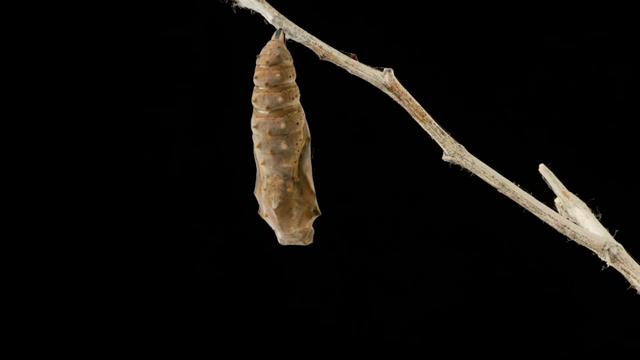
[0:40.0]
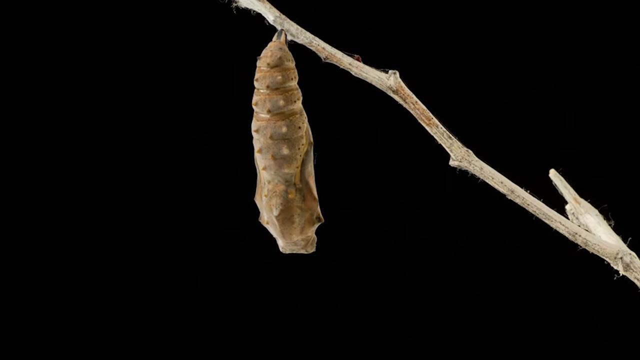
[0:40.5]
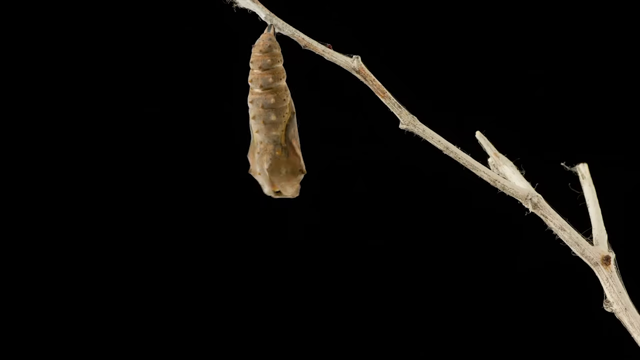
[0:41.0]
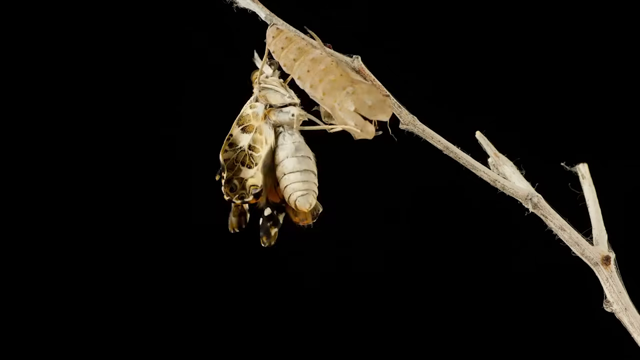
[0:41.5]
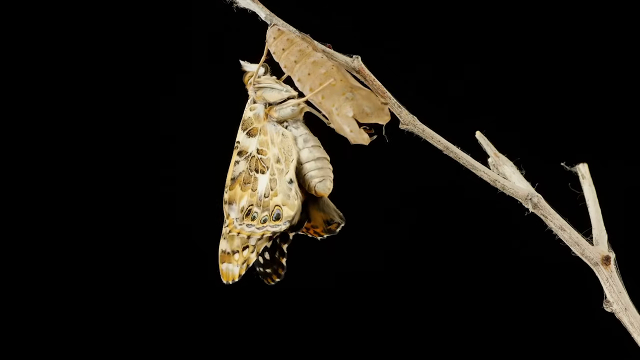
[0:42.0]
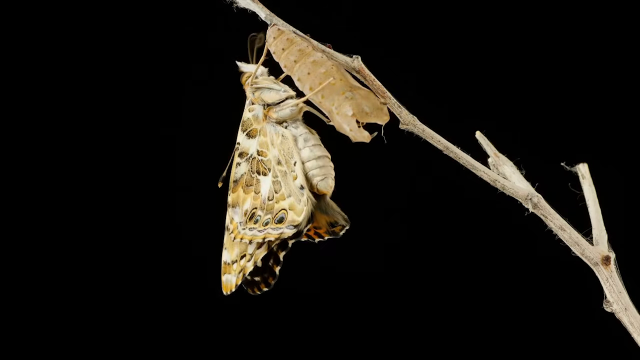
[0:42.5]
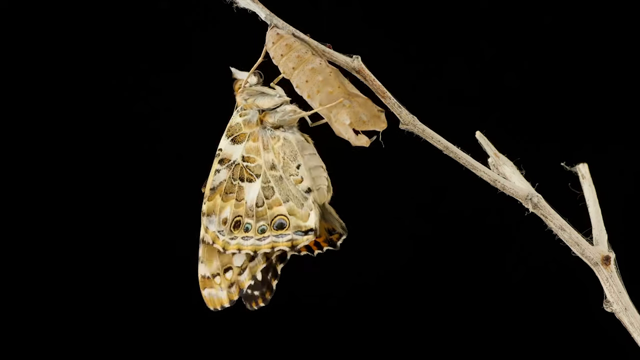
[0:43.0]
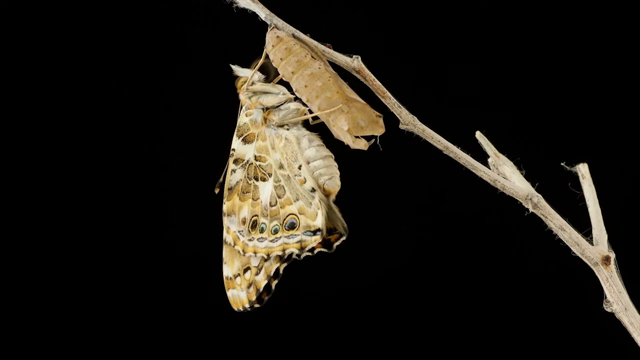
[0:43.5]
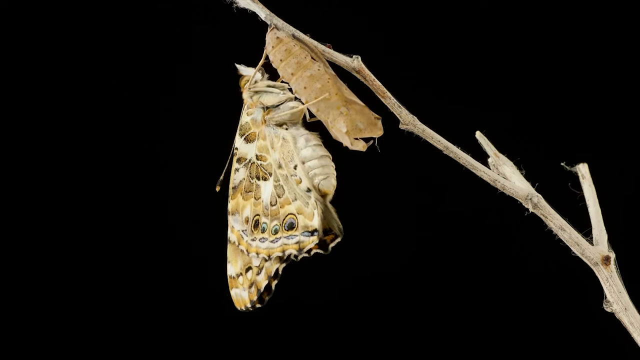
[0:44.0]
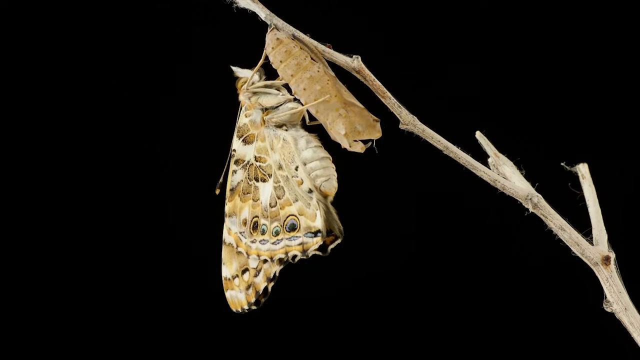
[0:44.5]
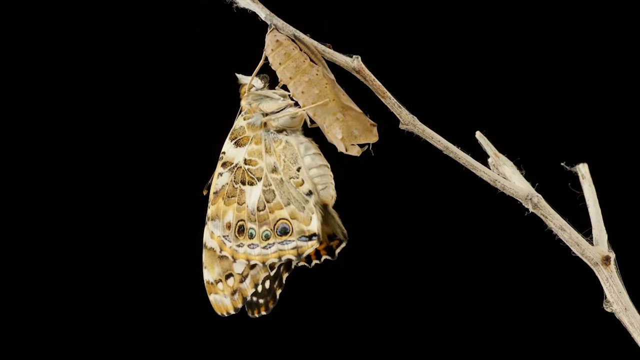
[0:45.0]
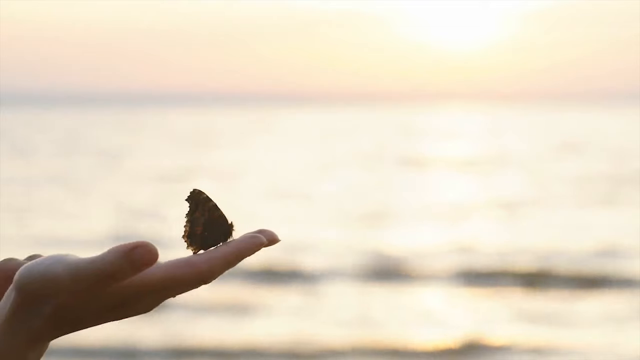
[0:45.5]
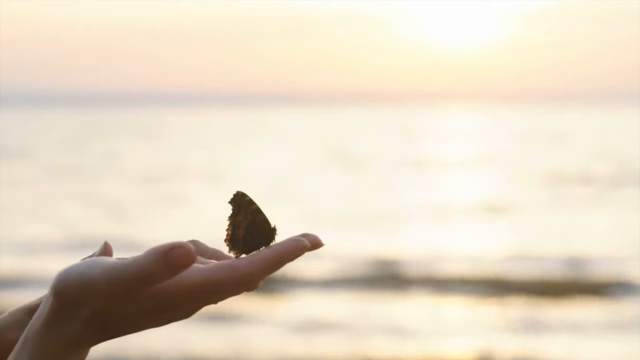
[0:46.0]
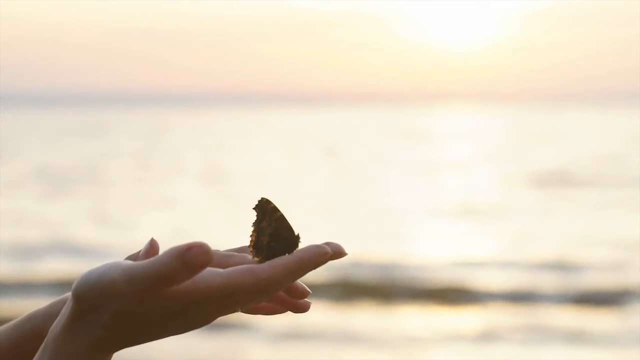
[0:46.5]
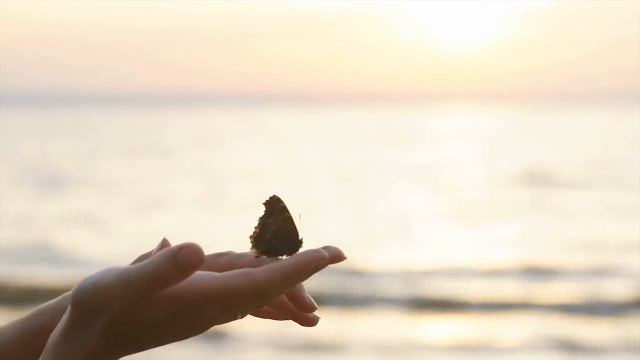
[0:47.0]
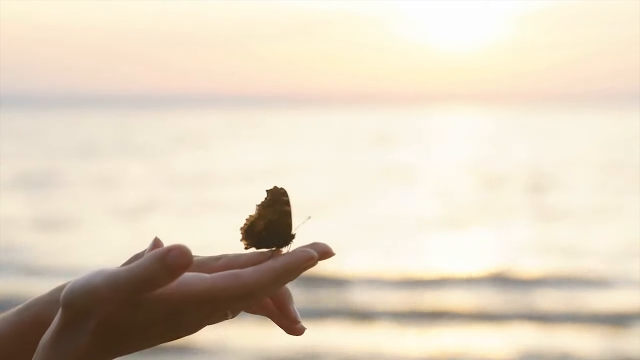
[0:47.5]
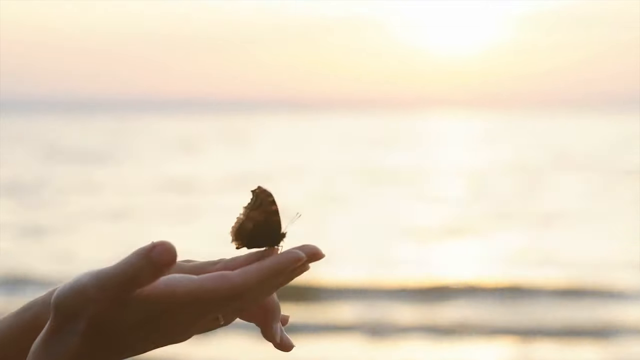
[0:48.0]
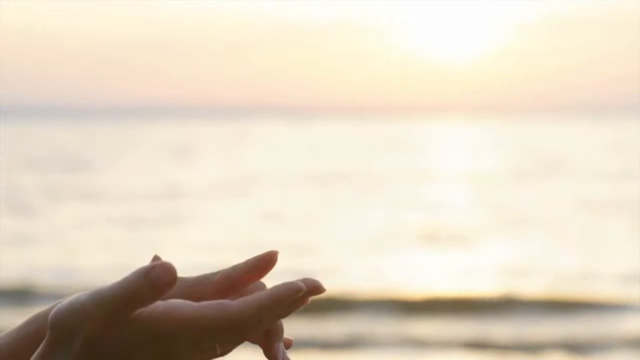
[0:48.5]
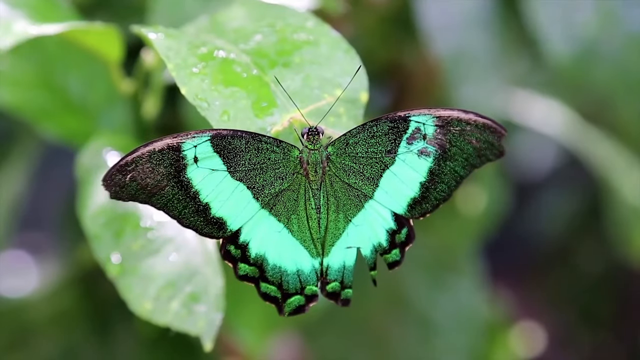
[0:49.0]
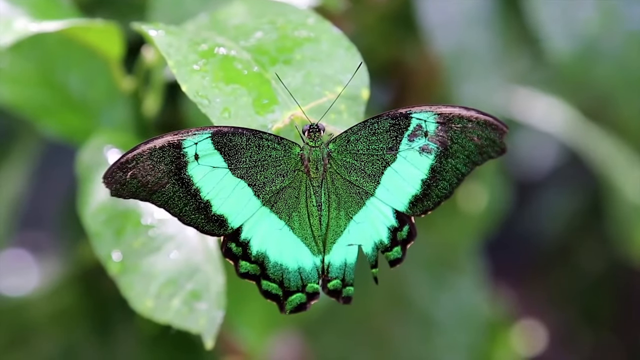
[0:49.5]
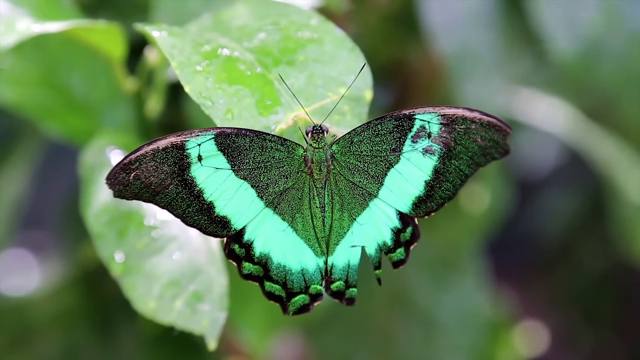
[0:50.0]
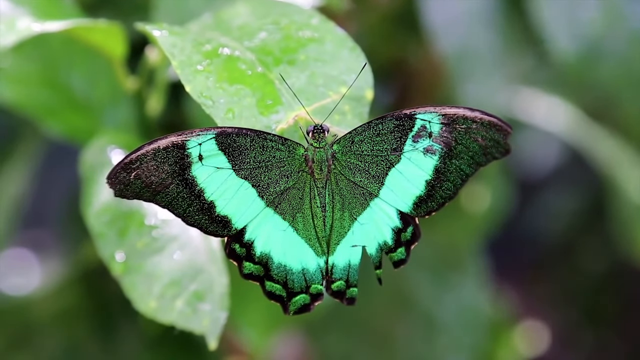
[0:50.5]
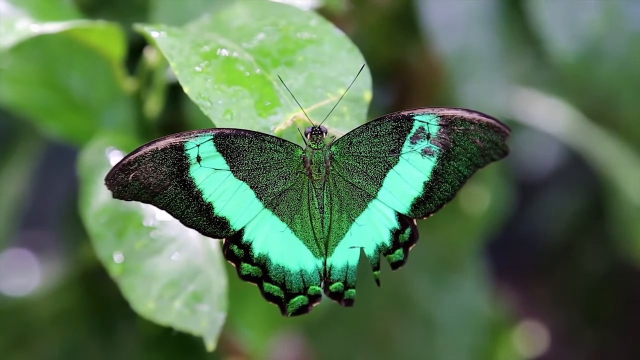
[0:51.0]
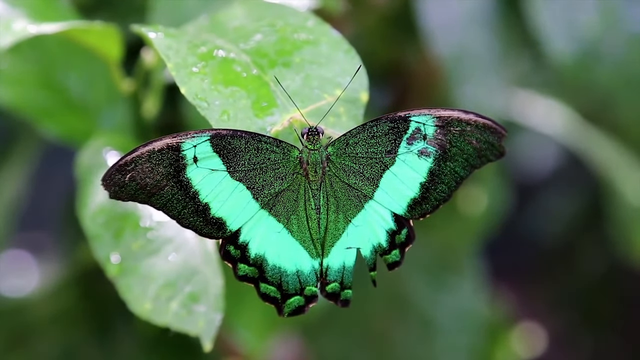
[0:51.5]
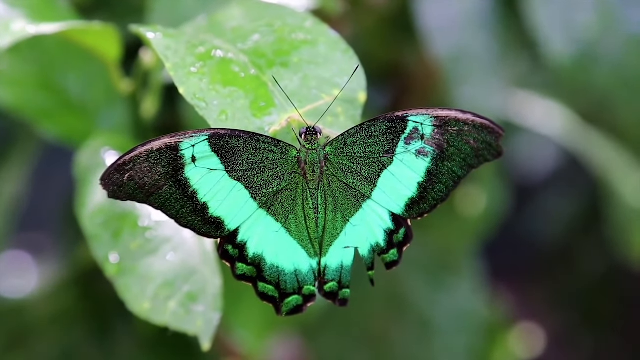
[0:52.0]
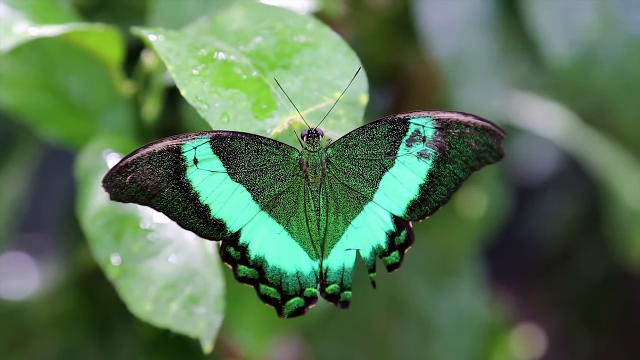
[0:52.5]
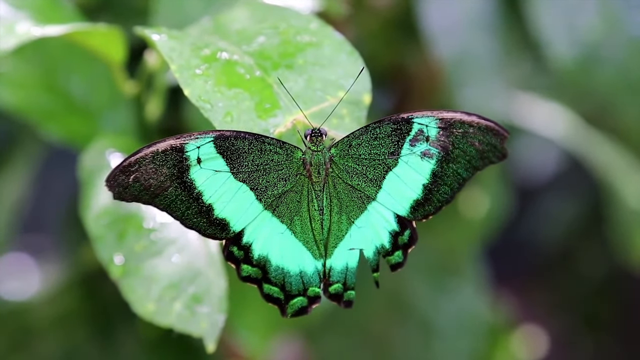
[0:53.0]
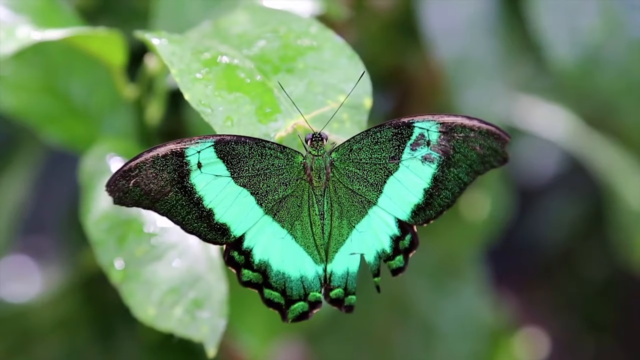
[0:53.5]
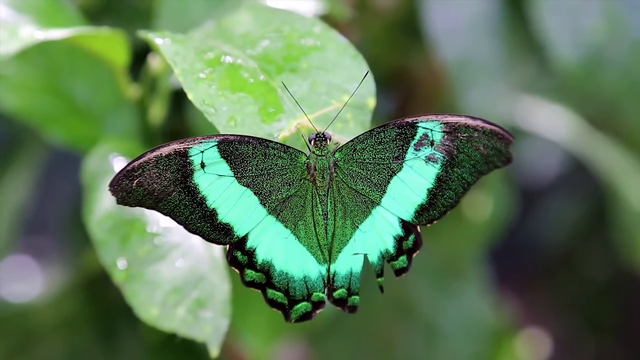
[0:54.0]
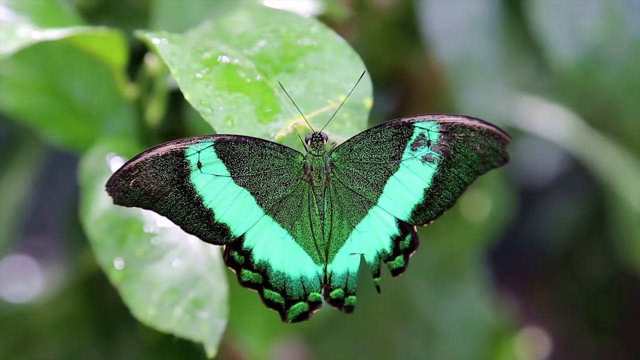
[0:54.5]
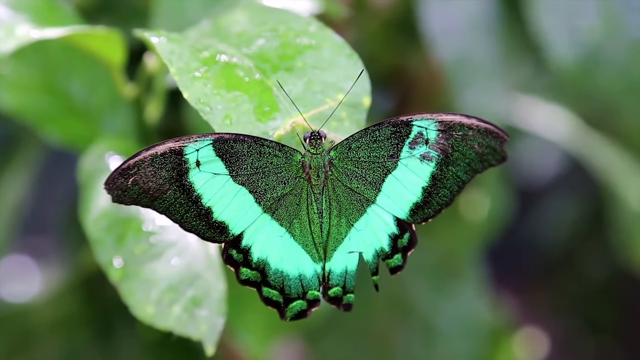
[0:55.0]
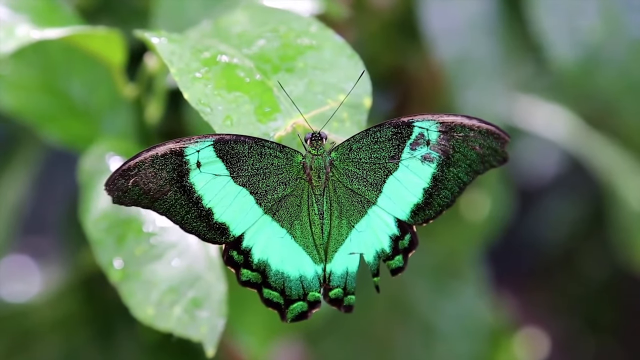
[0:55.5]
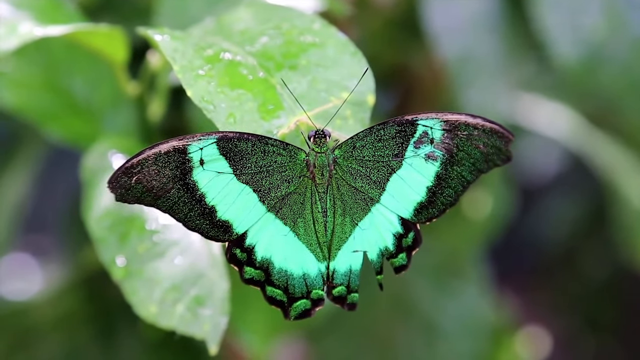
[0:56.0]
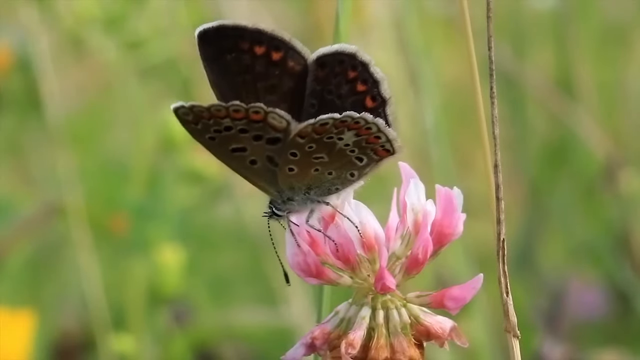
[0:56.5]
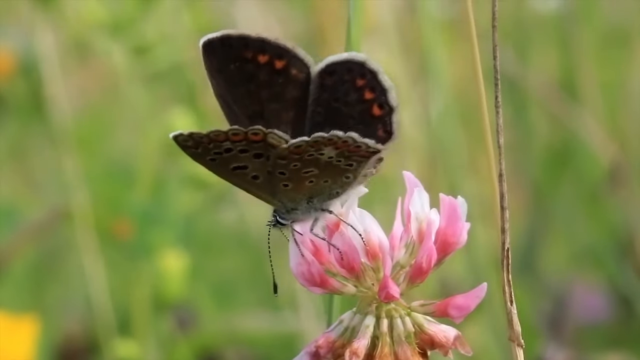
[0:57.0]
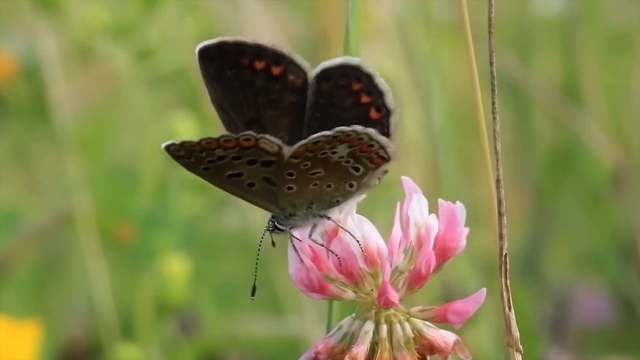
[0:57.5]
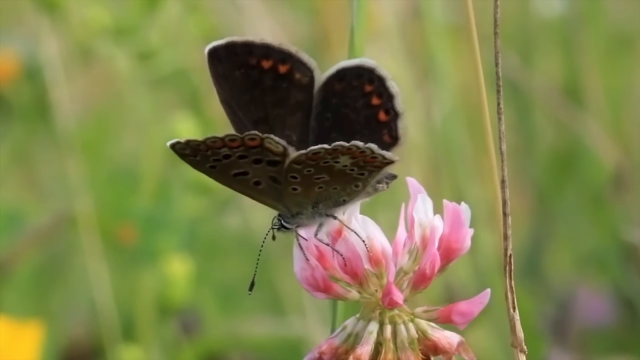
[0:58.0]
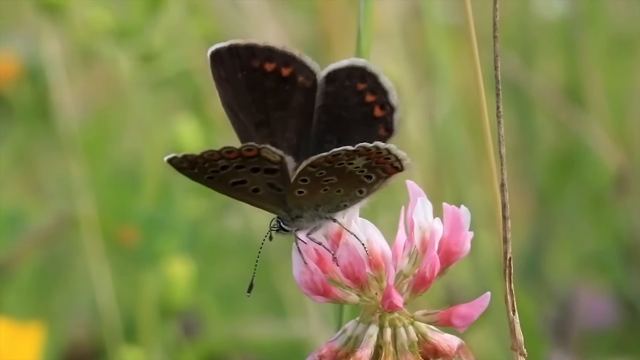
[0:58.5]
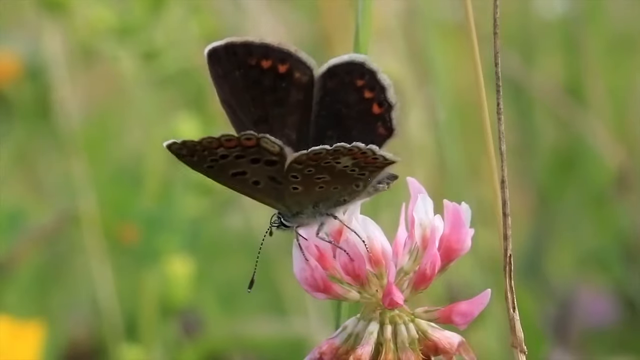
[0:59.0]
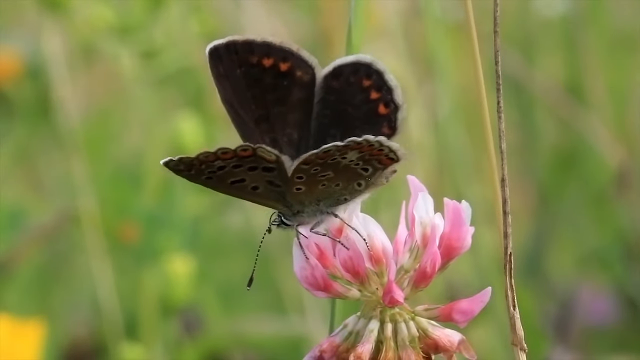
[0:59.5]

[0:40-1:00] The white lettering at the top reads "Butterflies, fun butterfly facts for kids." To the top left of it is a yellow circle with a green circle inside, and at the center is the face of a tiger that is brownish yellow with black and white stripes under its chin. Against a black background, a gray branch sticks upwards, and a brownish grayish cone hangs from it. The cone breaks, and a gray butterfly breaks free, mounts on top of the cone, and flaps its wings. Next, against a blurred yellow background, a butterfly sits on top of a white person's hand, flapping its brown wings and then flying off. Then, against a blurry greenish background, a butterfly sits on top of wet green leaves with its wings spread out; its black antennae and head are just visible, and it has black wings with a lime powder blue V shape on them. Finally, a pink flower appears against a fuzzy green background with a brownish gray winged butterfly that has orange circles on its wings, rotating its wings side to side.